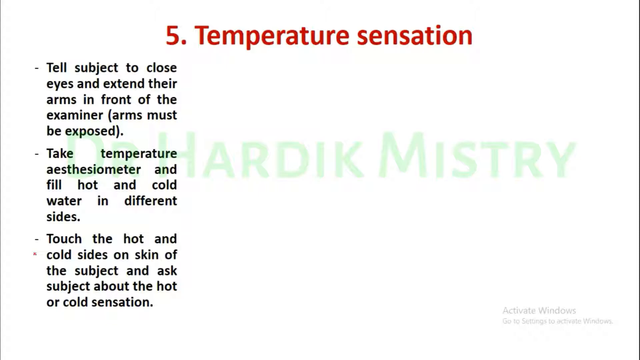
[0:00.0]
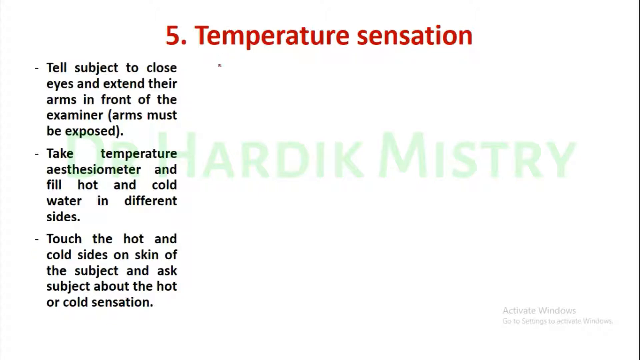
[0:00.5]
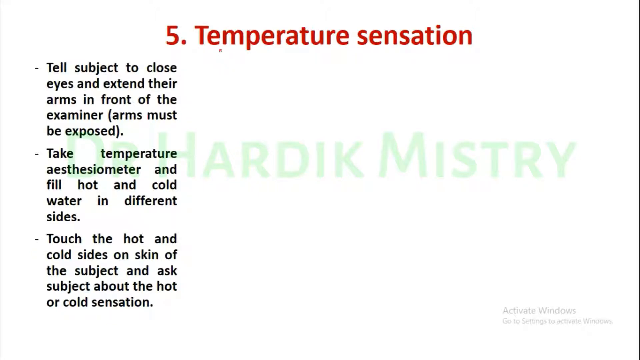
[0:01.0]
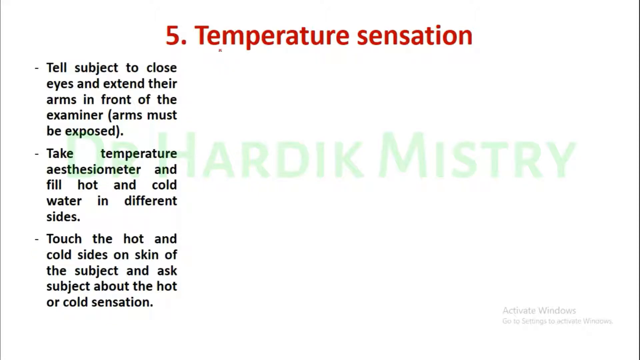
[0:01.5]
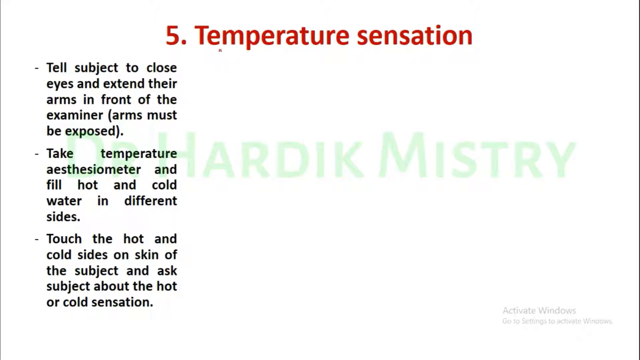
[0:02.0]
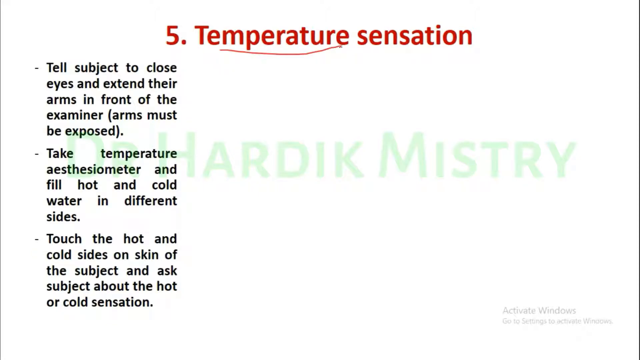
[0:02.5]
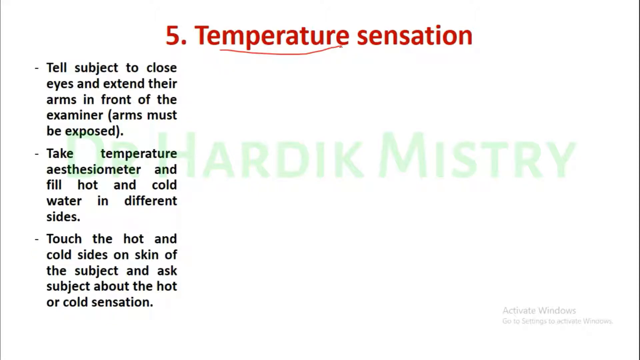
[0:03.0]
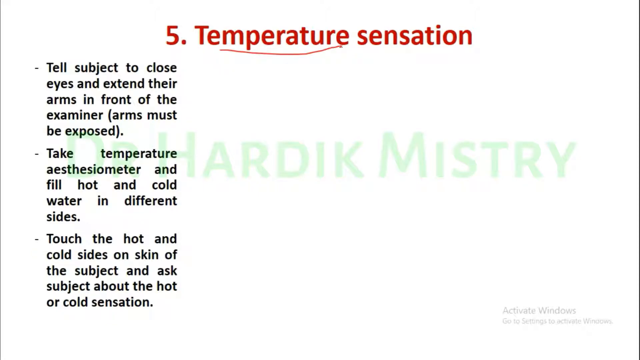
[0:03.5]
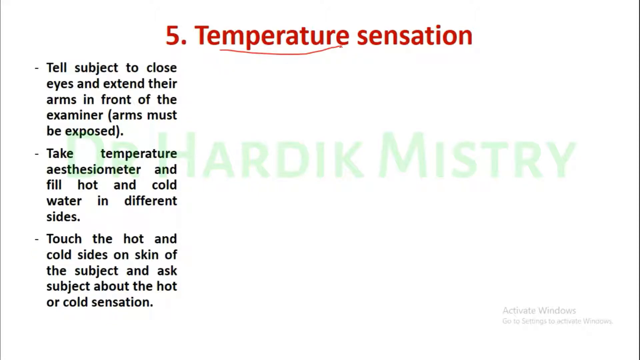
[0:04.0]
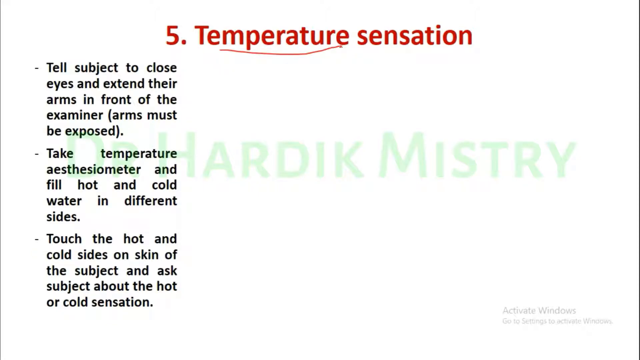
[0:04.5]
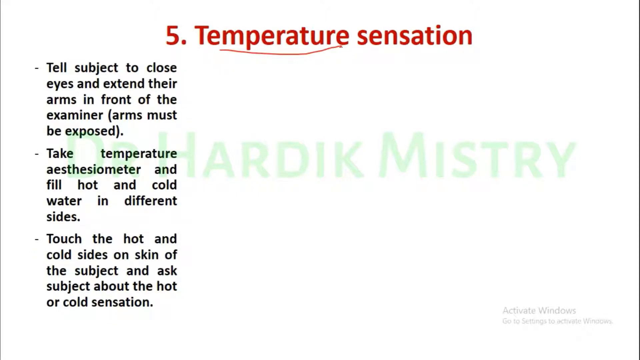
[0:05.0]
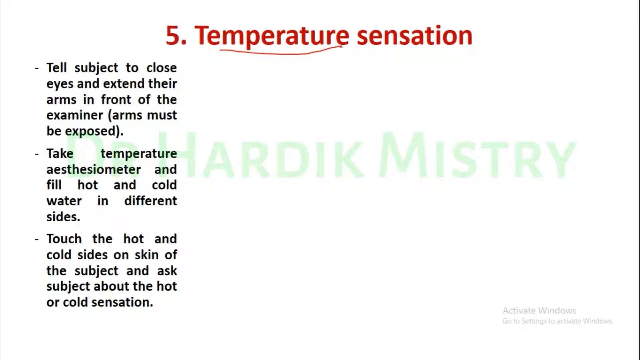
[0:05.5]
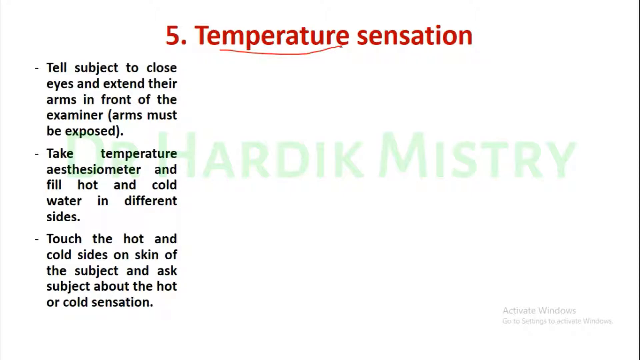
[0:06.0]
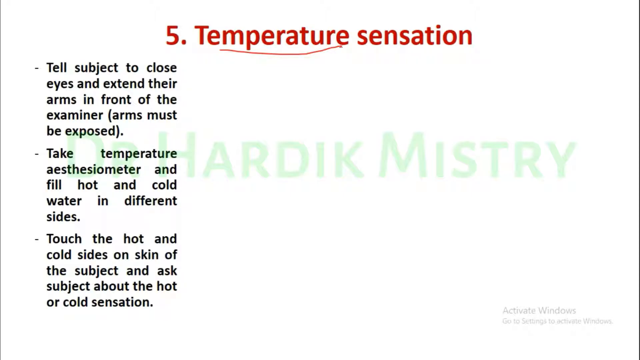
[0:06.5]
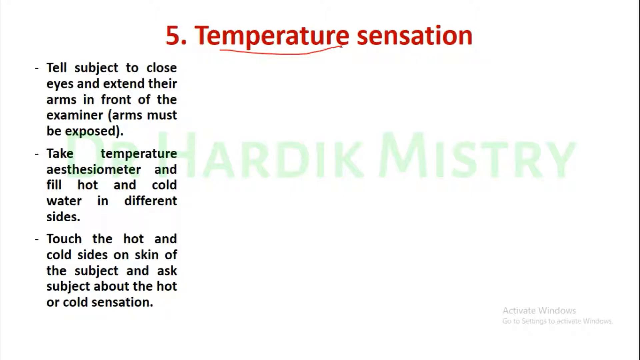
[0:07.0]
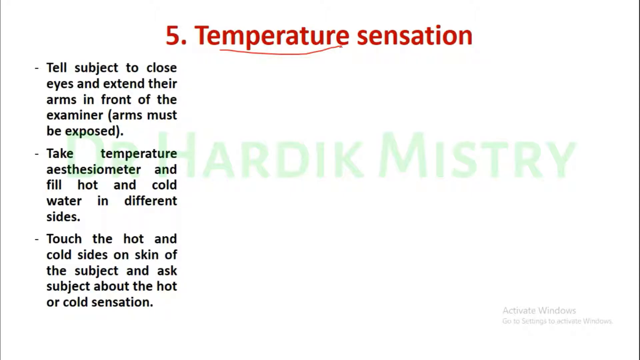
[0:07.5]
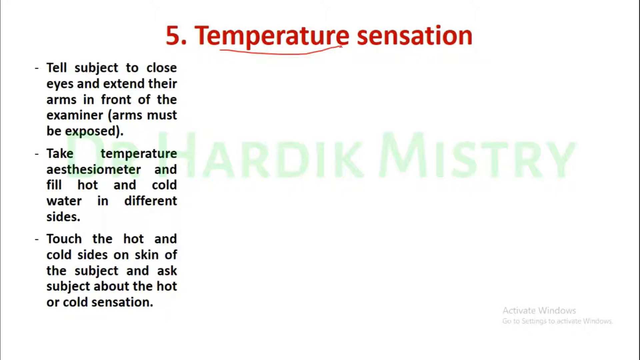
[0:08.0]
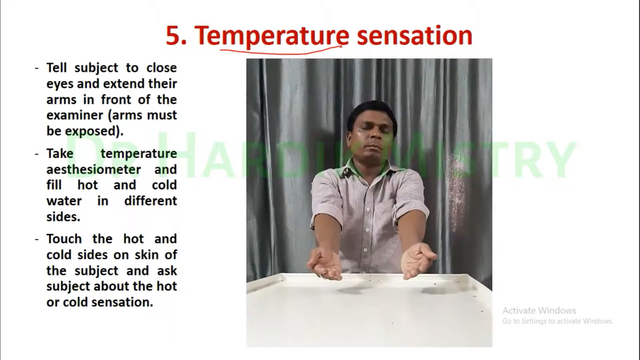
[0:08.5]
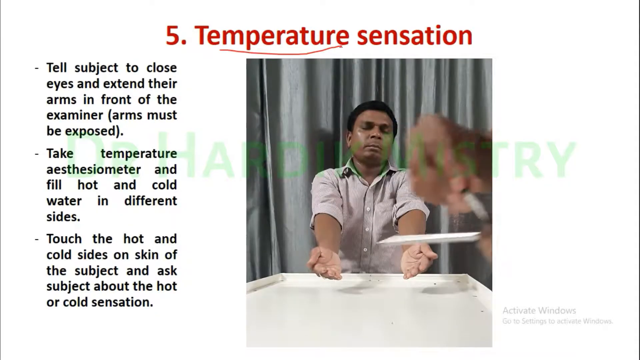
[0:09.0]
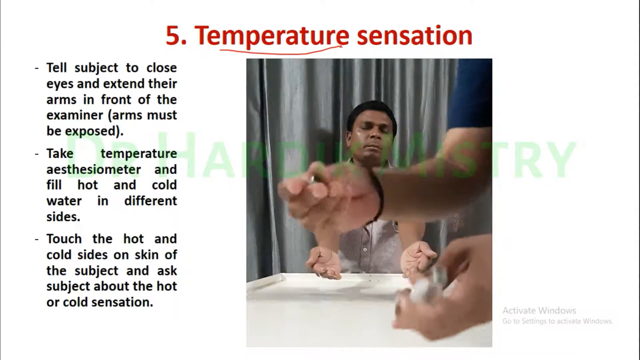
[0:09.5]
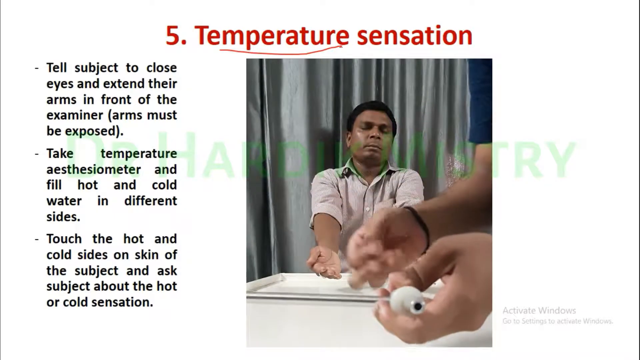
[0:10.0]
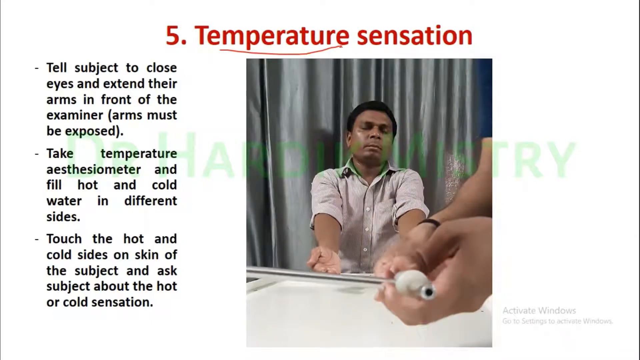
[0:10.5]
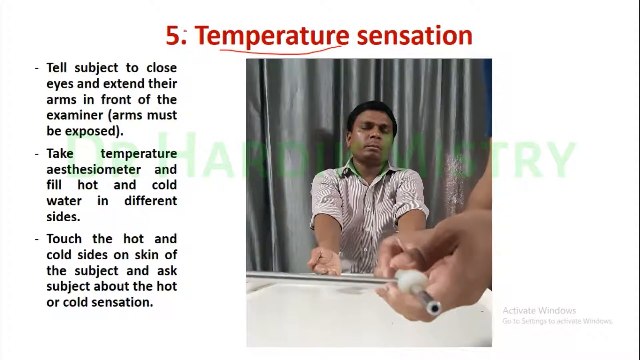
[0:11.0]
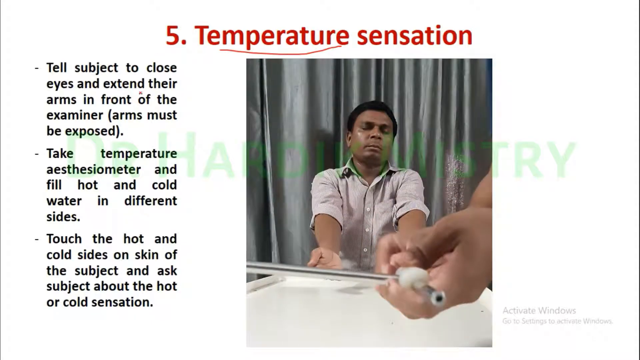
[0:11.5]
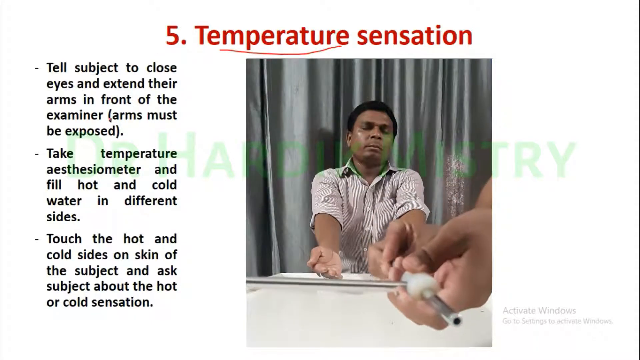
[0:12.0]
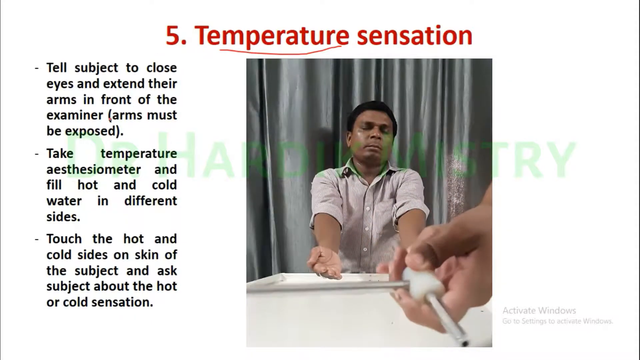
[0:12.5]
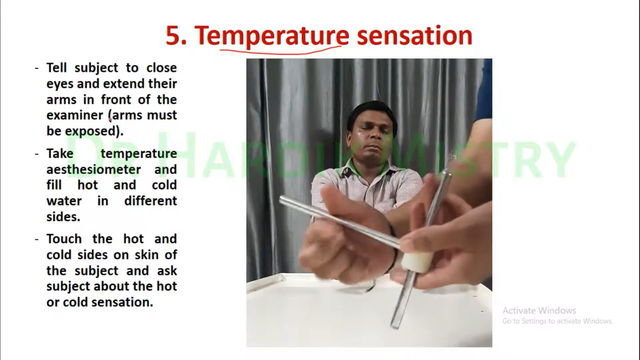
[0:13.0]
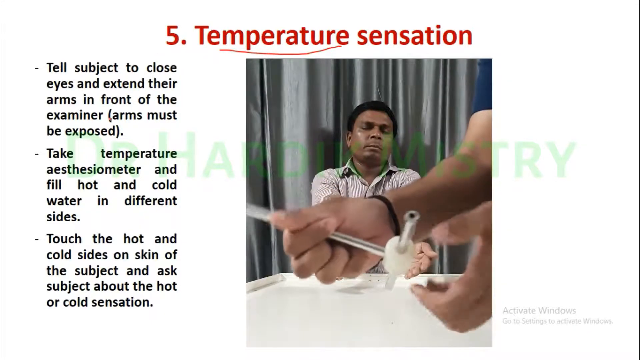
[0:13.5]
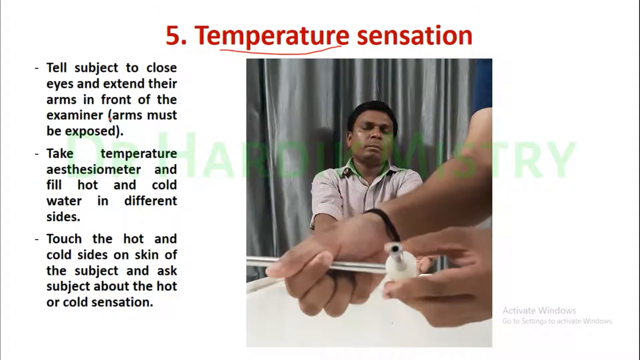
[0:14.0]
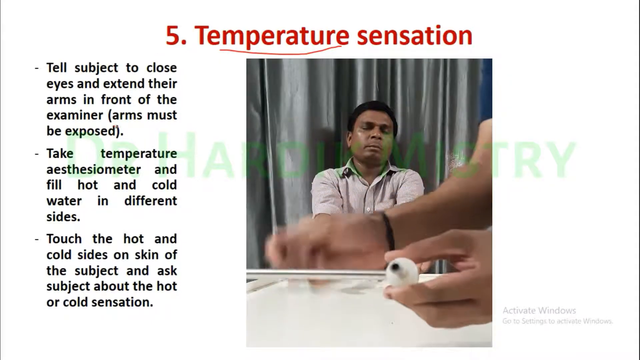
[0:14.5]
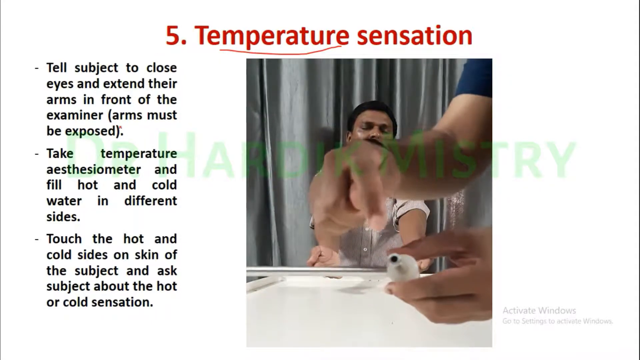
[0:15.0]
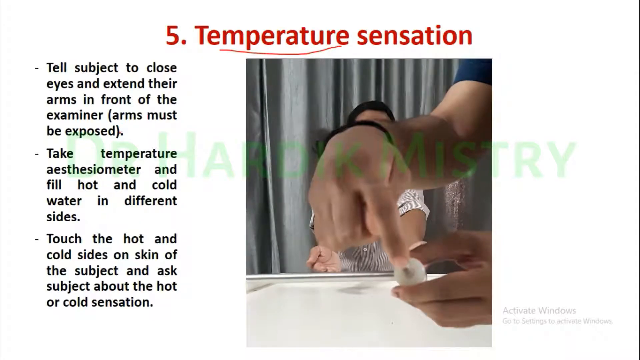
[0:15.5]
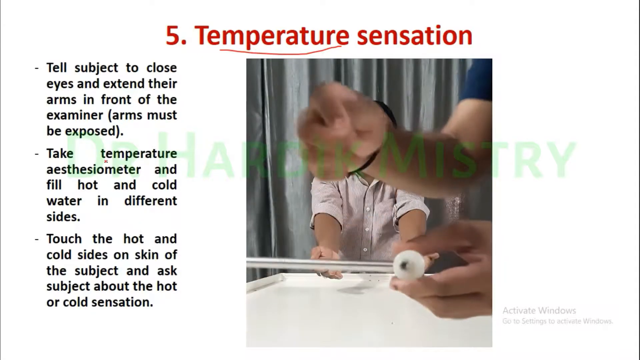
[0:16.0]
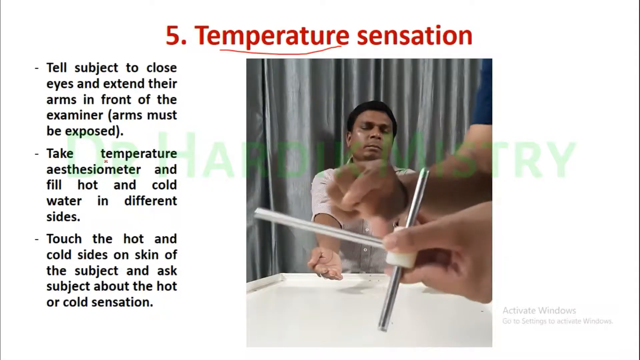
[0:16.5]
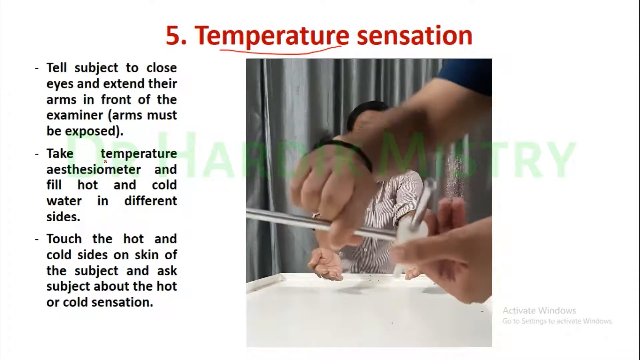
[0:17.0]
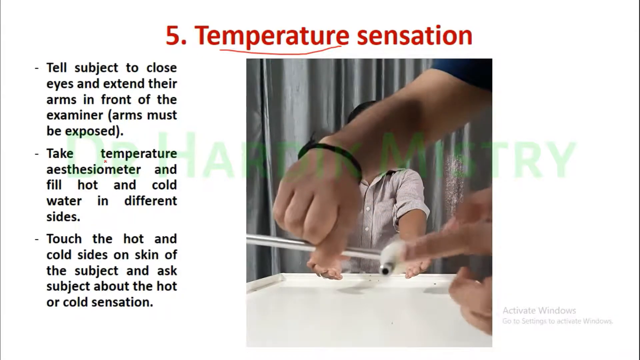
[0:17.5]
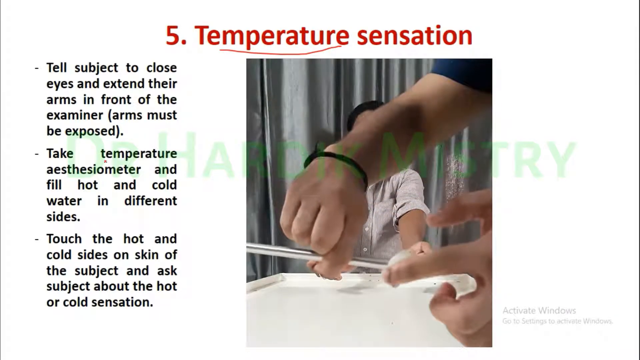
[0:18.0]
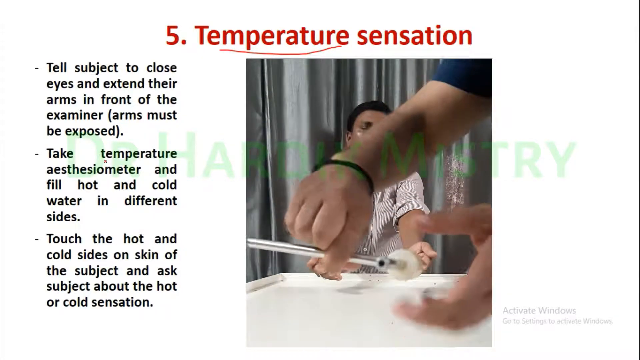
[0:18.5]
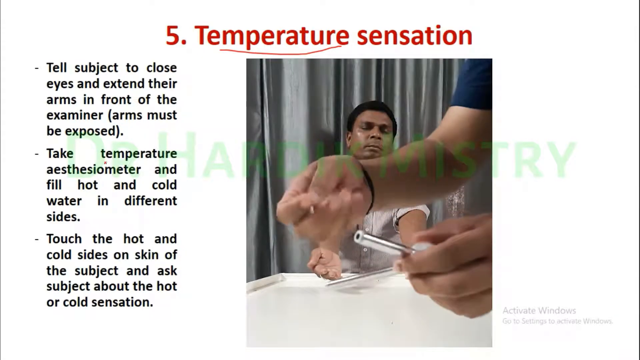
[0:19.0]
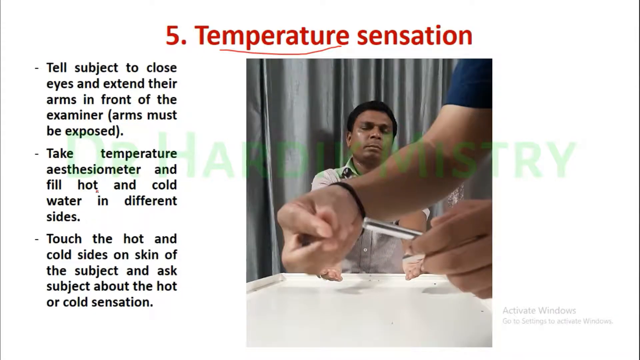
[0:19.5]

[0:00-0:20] The video shows what is perhaps a screenshot. At the top, in red lettering, it reads "5. temperature sensation," and it looks like someone took a red marker and messily drew a line under the word "temperature." On the left-hand side are three points marked with dashes instead of bullets, set almost like a newspaper in a narrow column. The first point says "tell subject to close eyes and extend their arms in front of the examiner," followed in parentheses by "arms must be exposed." The second point says "take temperature, aesthesiometer, and fill hot and cold water in different sides." The third point says "touch the hot and cold sides on skin of the subject and ask the subject about the hot or cold sensation." Suddenly, on the right, a small video appears in a window, showing a man sitting with his hands out and palms up; he may be African-American or Spanish. Another person comes closer to the camera holding something, some sort of metal object; they are screwing something on and pointing to the ends.